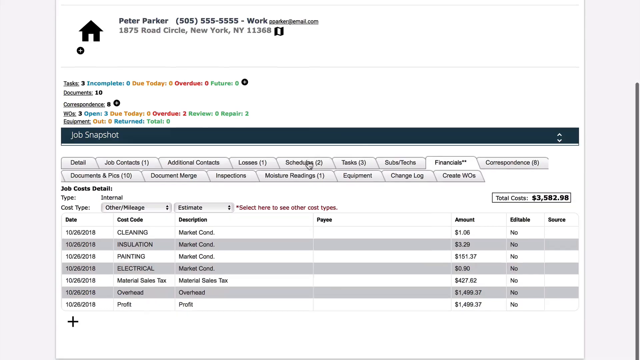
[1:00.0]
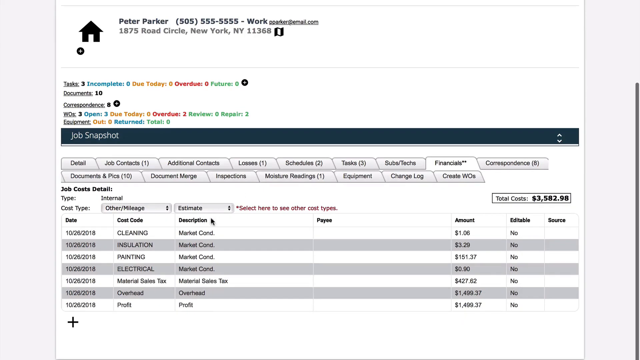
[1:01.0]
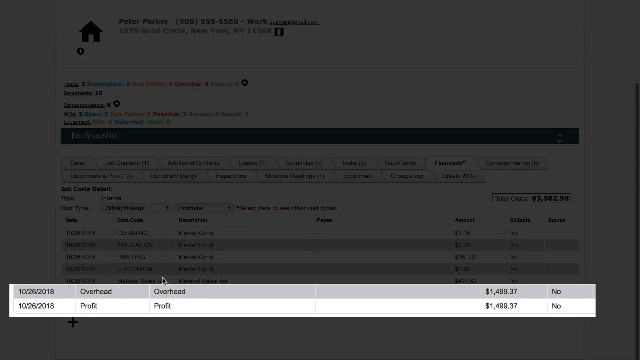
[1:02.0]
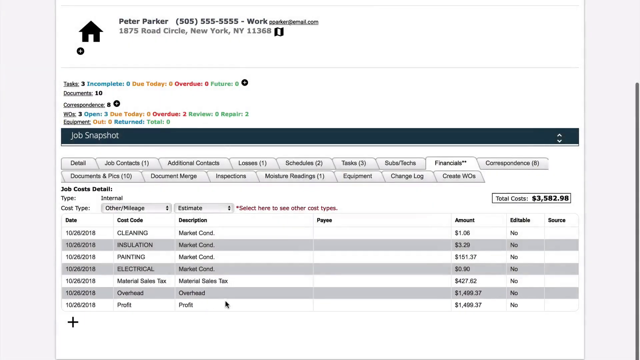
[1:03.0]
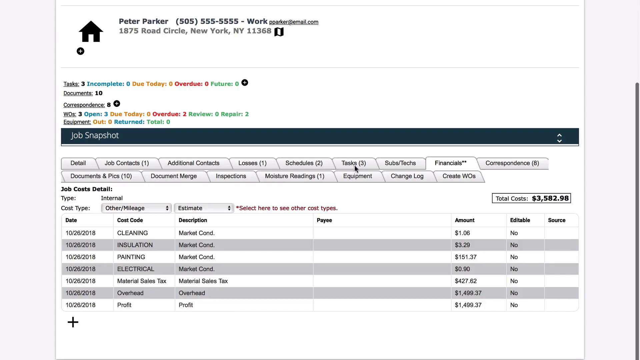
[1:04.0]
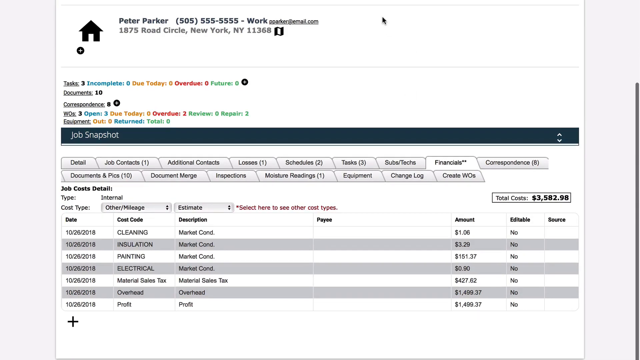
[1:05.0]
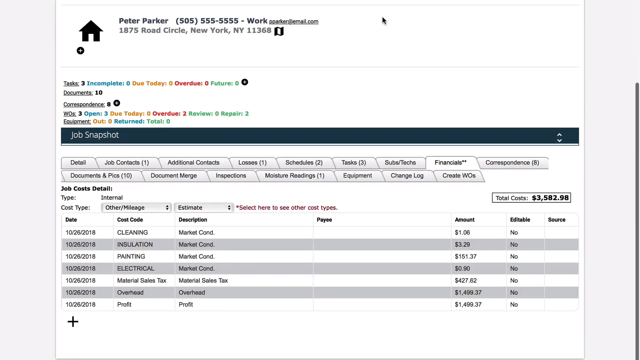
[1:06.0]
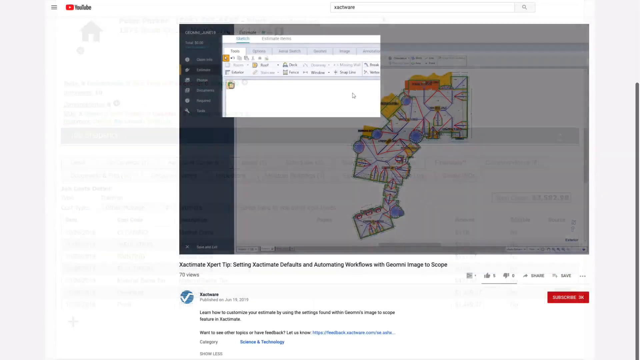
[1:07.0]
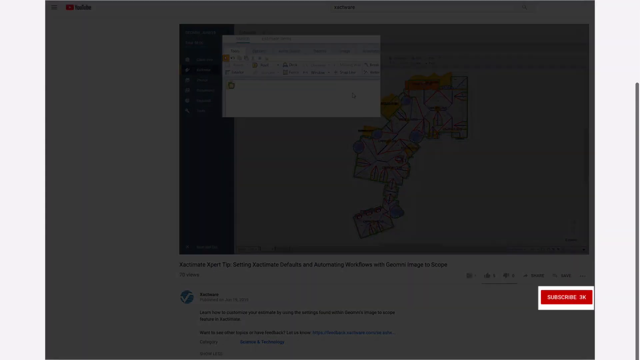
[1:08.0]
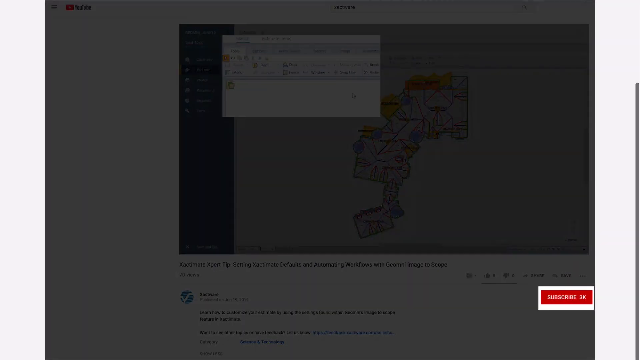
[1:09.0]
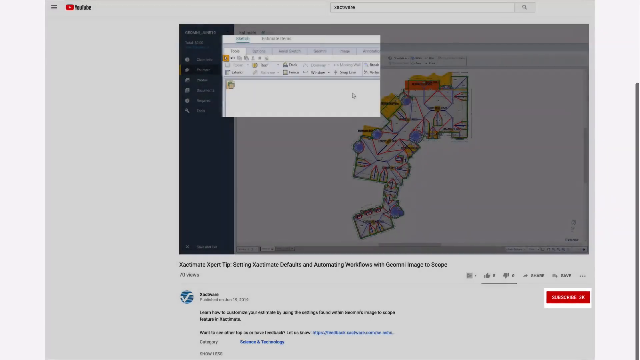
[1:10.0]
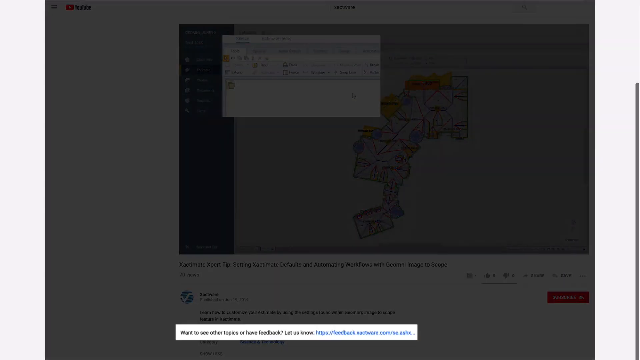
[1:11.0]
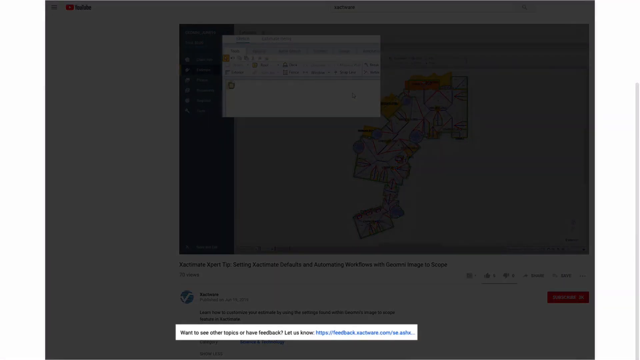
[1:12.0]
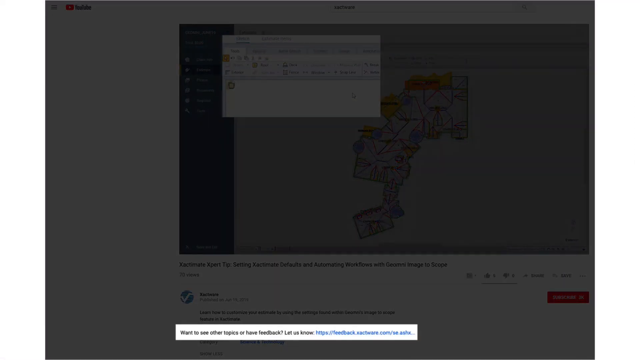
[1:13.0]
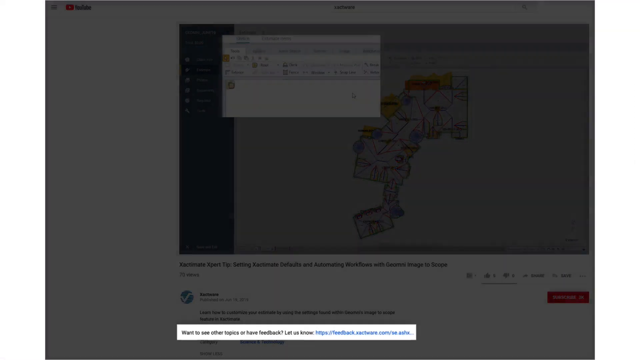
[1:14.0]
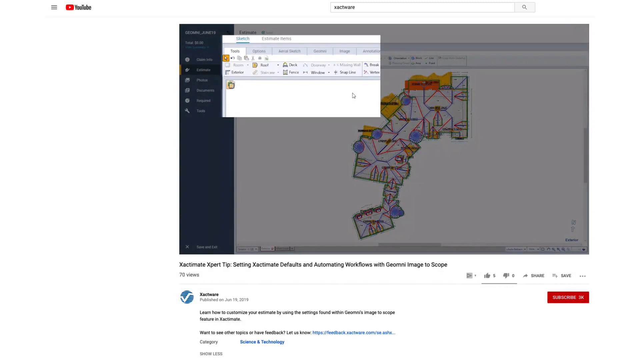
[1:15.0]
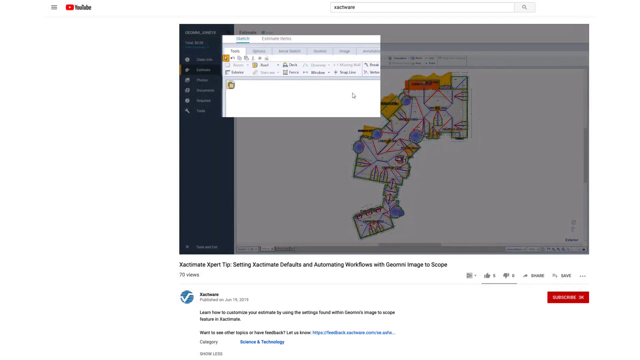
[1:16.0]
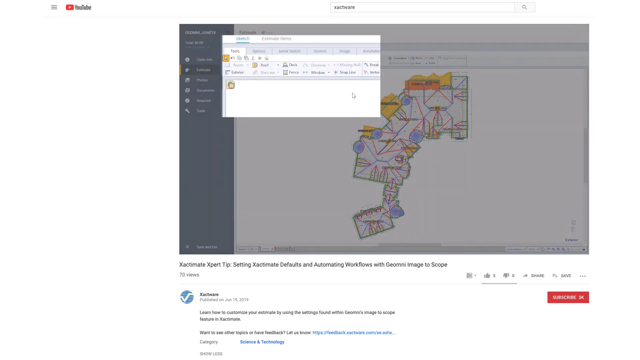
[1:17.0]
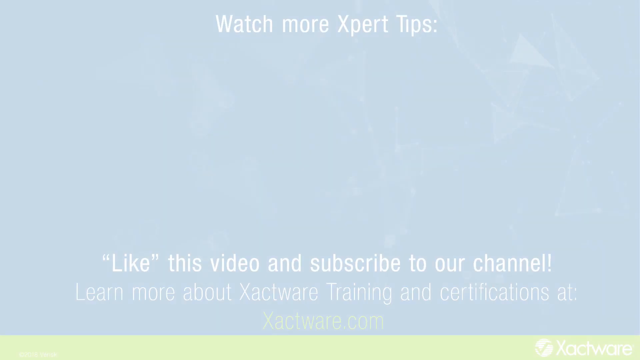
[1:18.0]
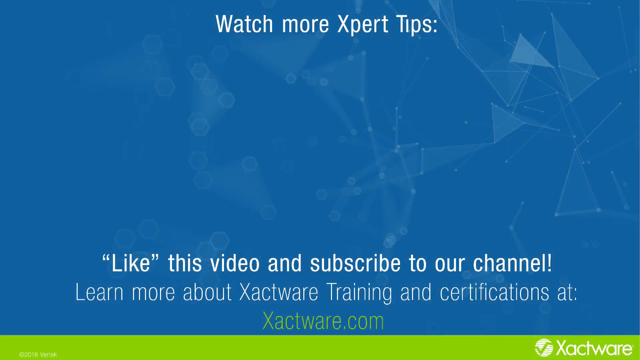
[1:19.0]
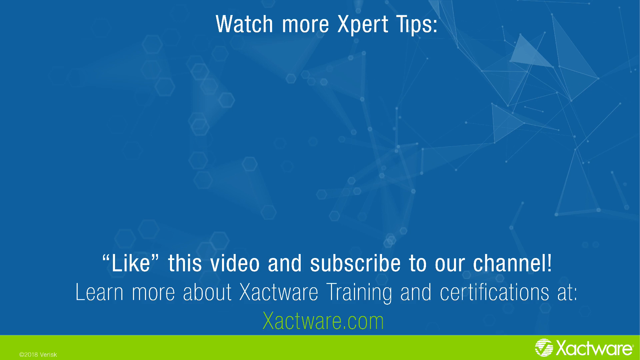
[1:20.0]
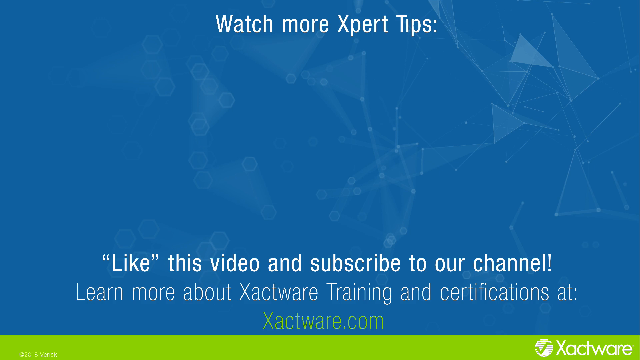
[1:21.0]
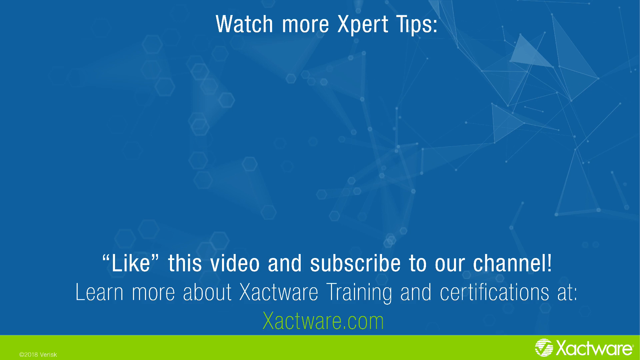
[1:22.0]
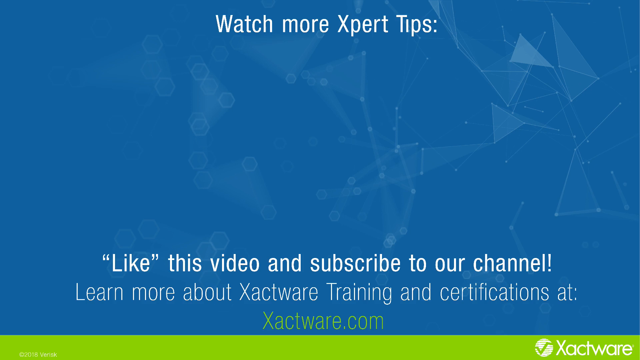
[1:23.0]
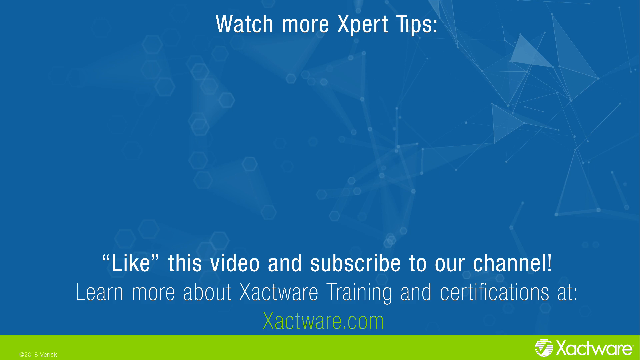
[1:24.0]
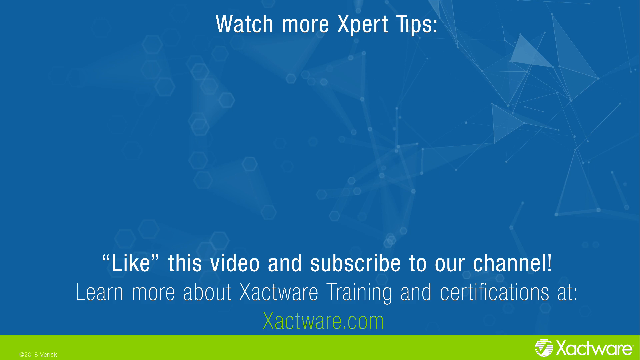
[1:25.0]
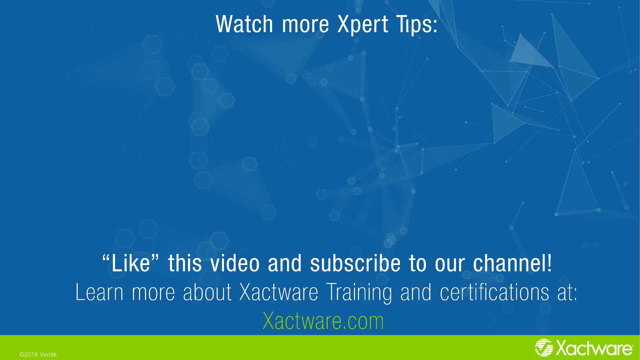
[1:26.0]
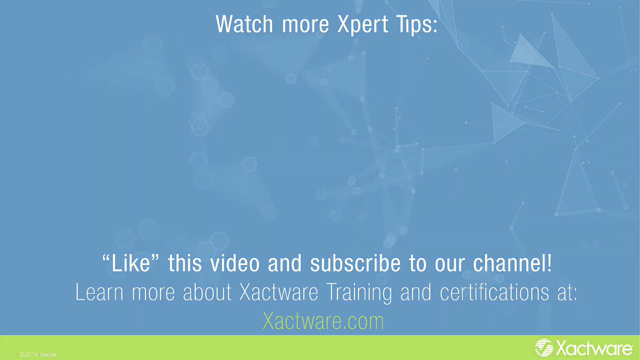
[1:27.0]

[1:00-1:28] The estimate's job snapshot shows an overview of materials and requests, a work profile, financials, job, new lead and new estimate, and labor and materials compared against the total budget. The dashboard shows the job contract, schedule, tasks and contracts. The current cost of materials is around $6,000, and the job name is Peter Park, at 187 Woodcycle, New York 11368. The task is incomplete, and documentation, inspection, readings and equipment are shown at zero or pending. Budget versus actual expenses and gross profit are shown, with different colors representing losses, gains and some options. Overhead profit is also visible. Xacware suggests subscribing to its YouTube channel to comment, learn more or see more video tips.